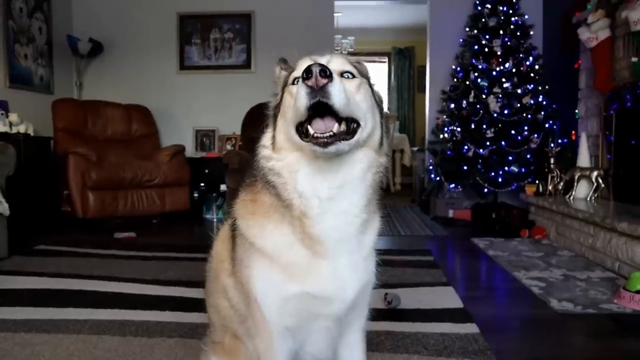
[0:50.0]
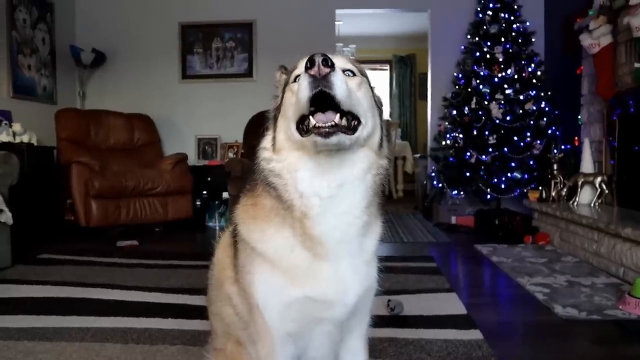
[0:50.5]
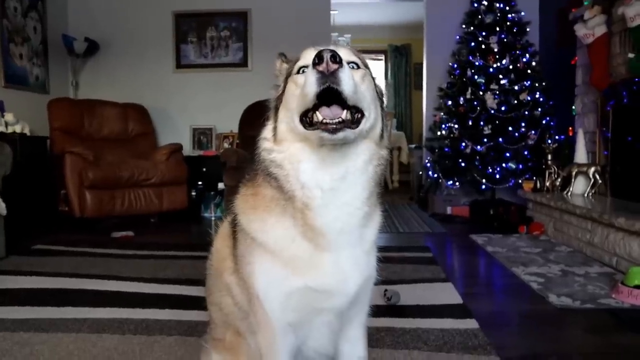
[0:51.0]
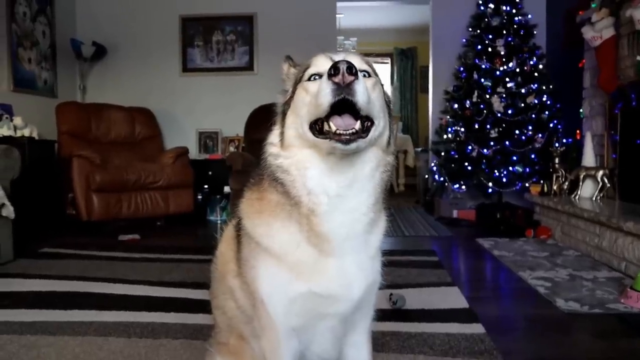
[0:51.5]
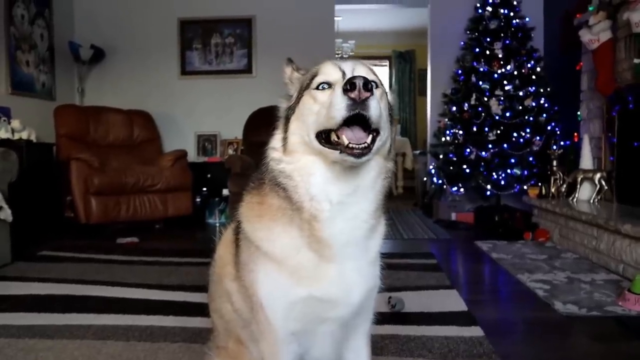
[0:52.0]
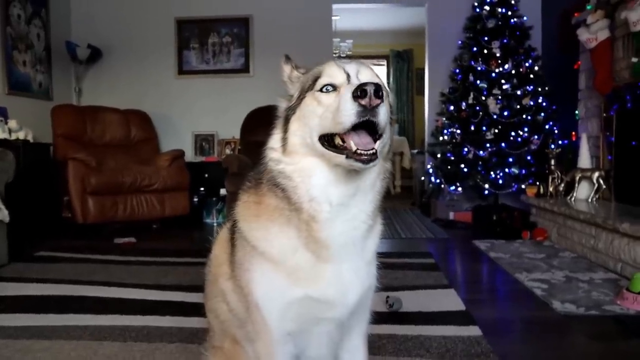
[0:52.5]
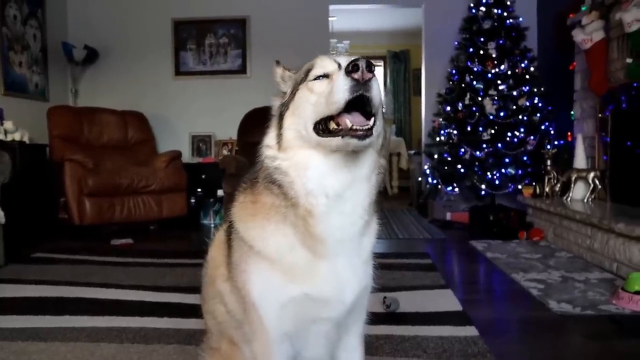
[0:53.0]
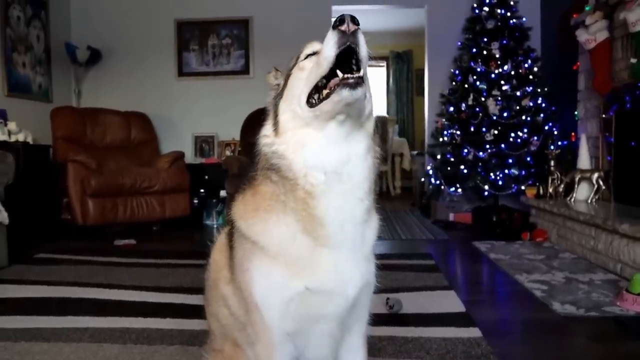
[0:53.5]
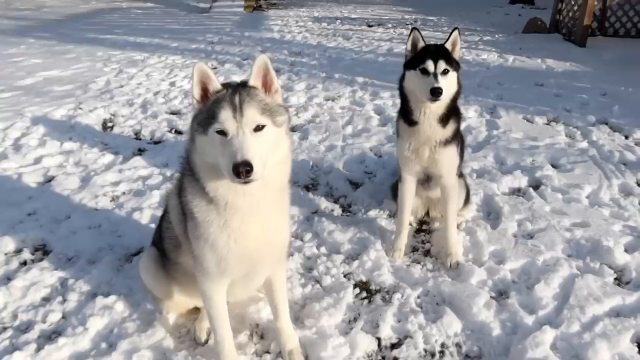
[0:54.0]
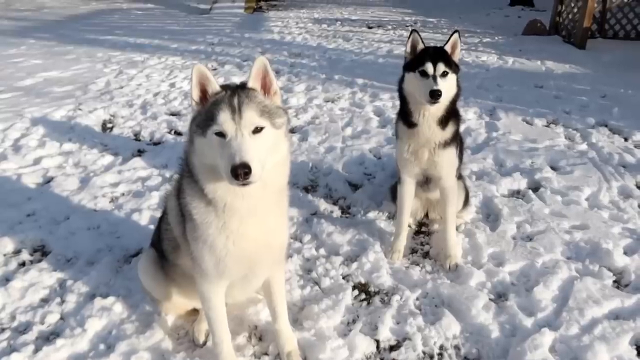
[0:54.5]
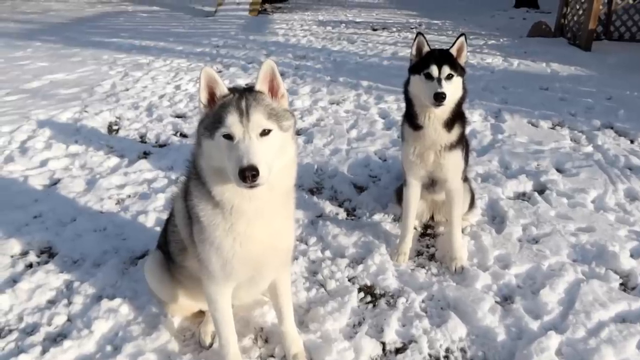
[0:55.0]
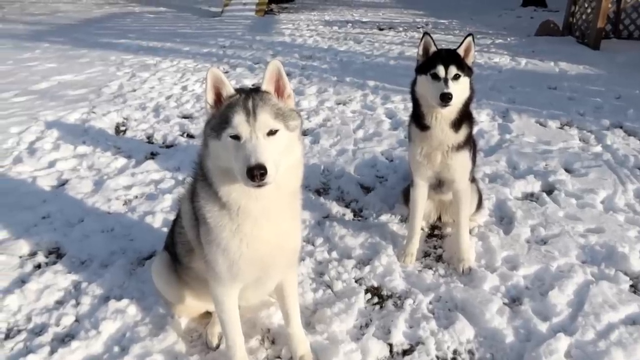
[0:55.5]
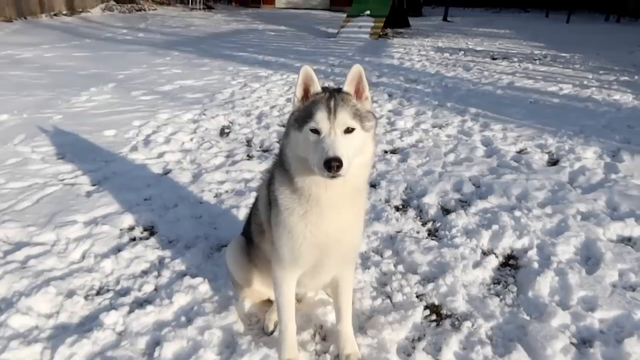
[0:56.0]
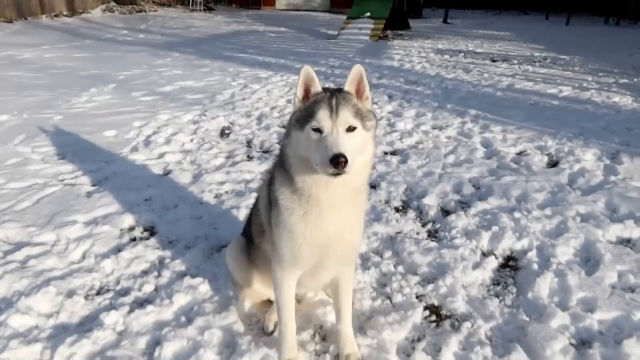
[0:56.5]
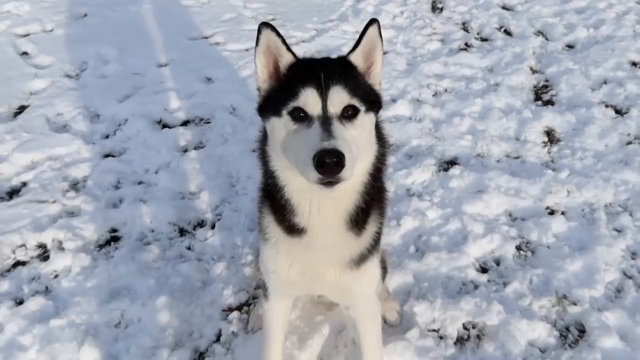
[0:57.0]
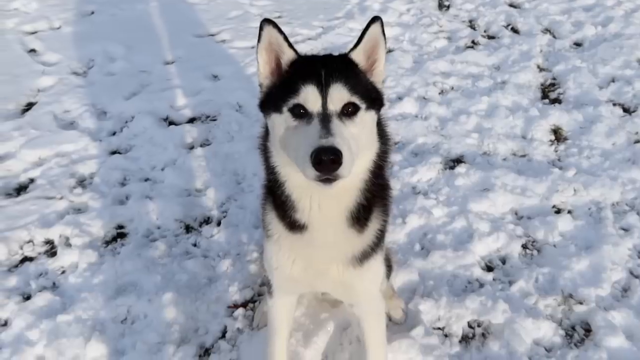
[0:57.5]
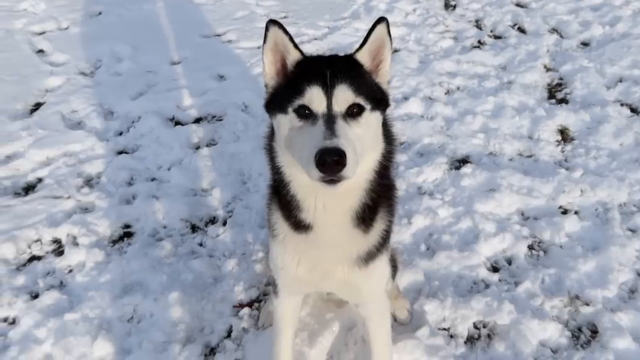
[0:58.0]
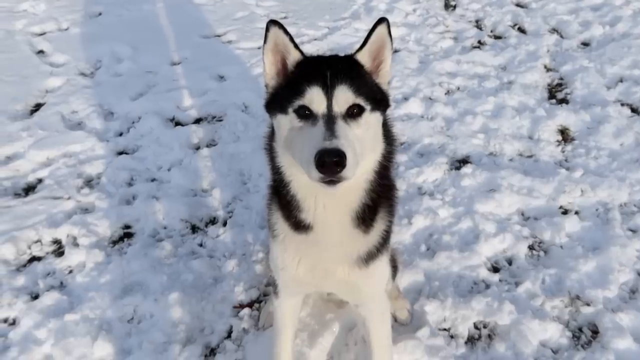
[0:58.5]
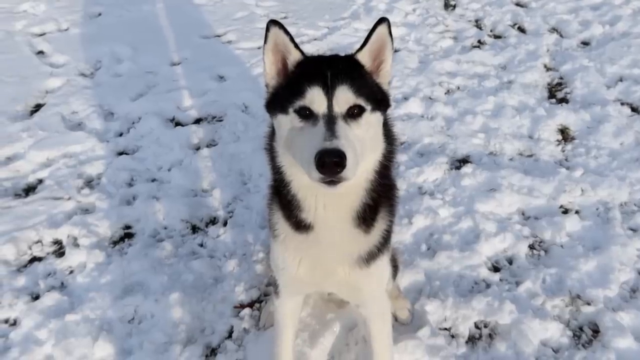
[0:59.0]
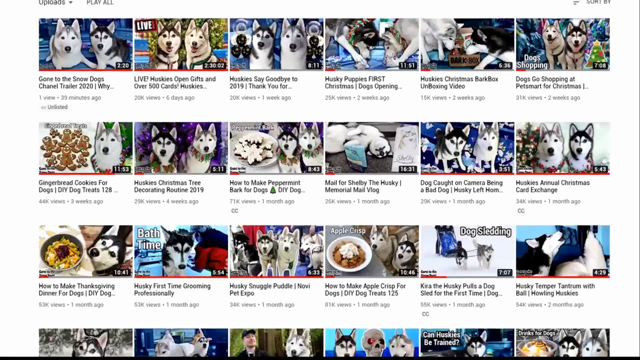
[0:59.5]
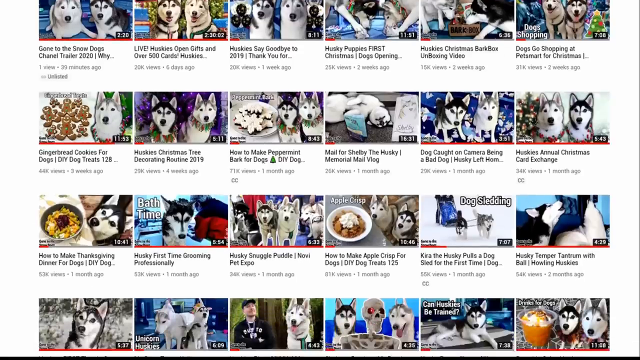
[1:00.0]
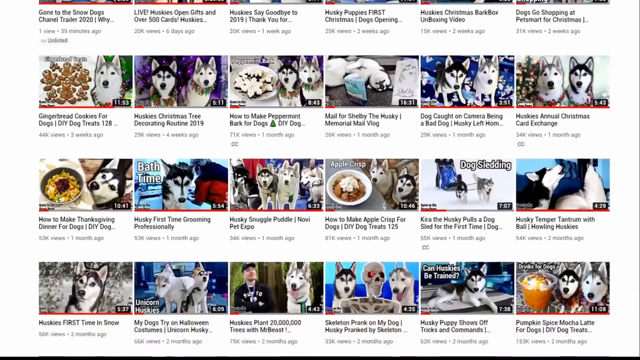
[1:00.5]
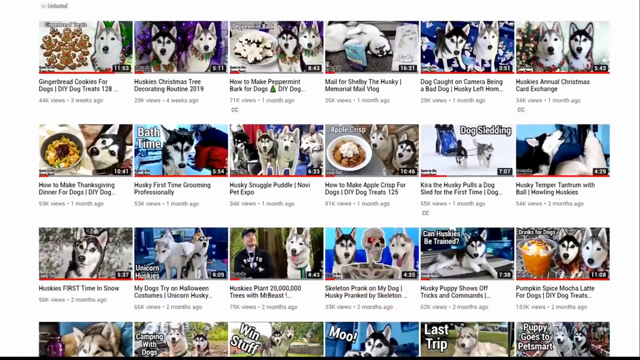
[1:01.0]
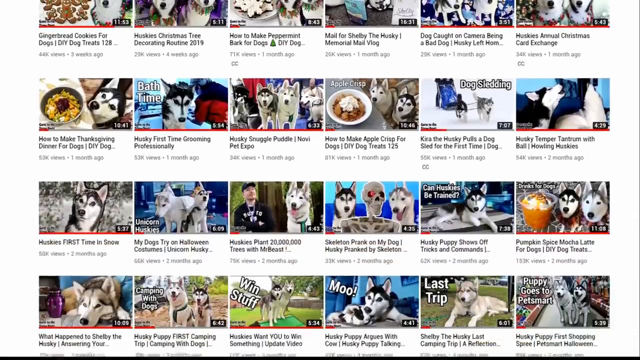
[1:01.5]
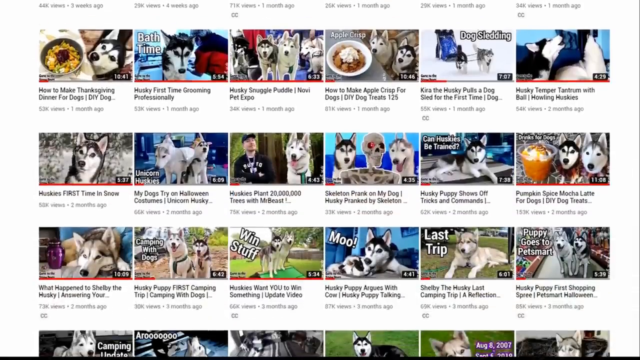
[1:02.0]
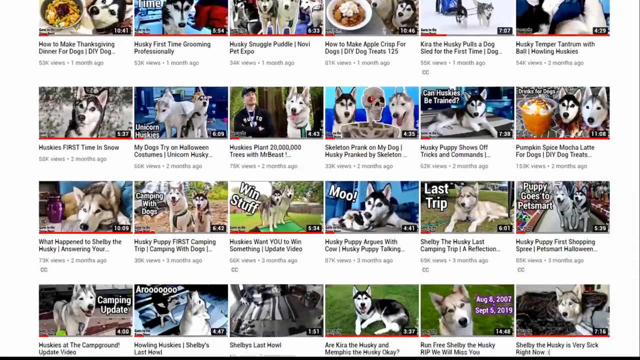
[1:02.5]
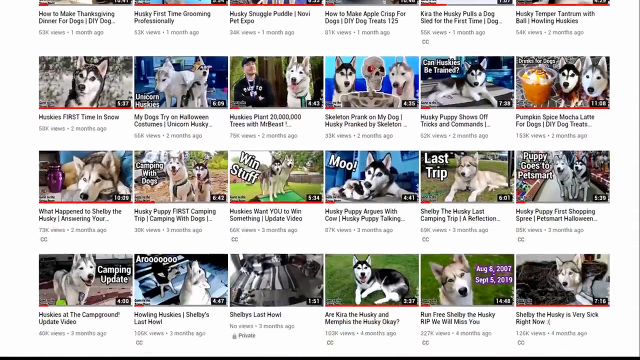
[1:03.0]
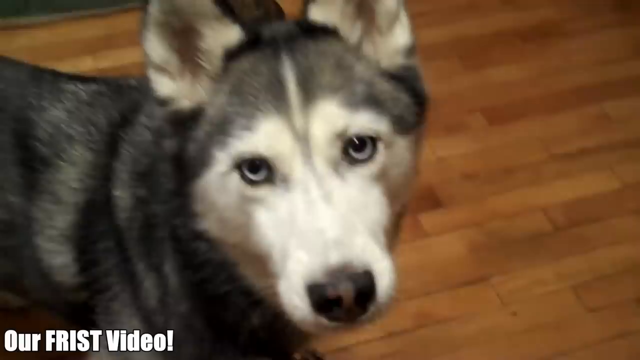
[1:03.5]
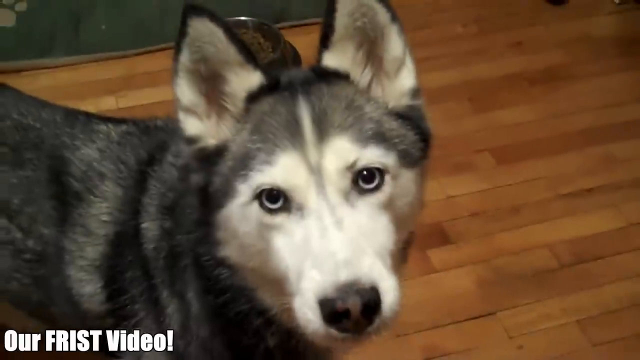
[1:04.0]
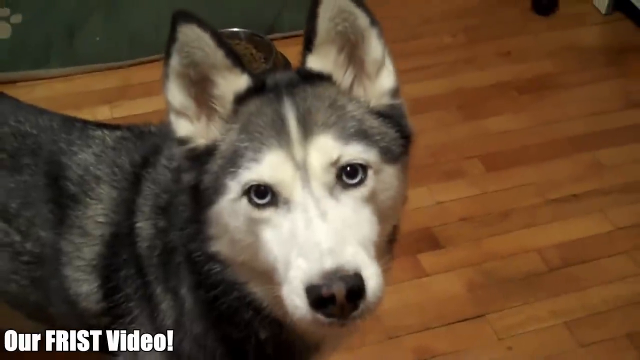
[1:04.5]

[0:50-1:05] Several scenes show between one and three husky-looking dogs. In a snowy setting two dogs stare at the camera, and then each dog is shown staring at the camera on its own. Next comes a screen recording of a YouTube video page with several video entries of these dogs, showing all the videos taken of them. At one point a subtitle says "our first video," marking the first video recorded of the dogs and encouraging viewers to watch the videos and subscribe.